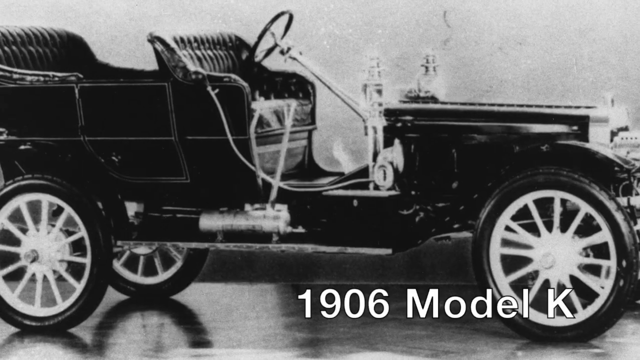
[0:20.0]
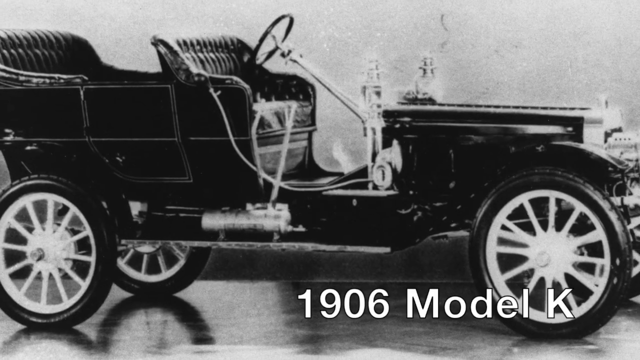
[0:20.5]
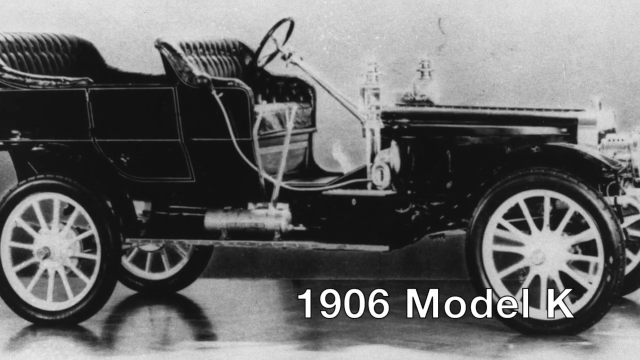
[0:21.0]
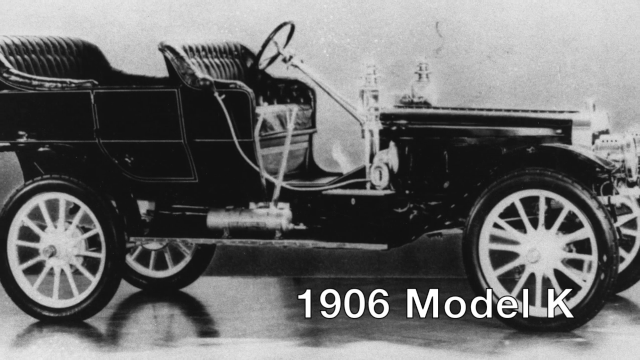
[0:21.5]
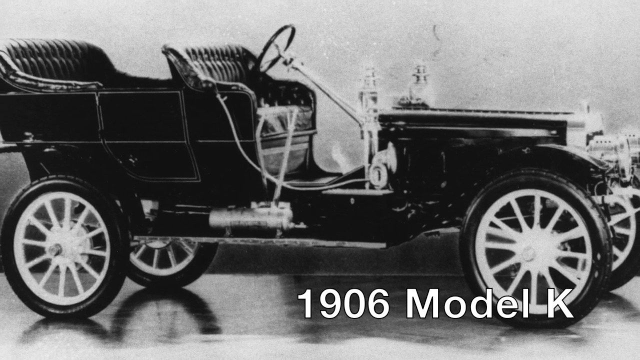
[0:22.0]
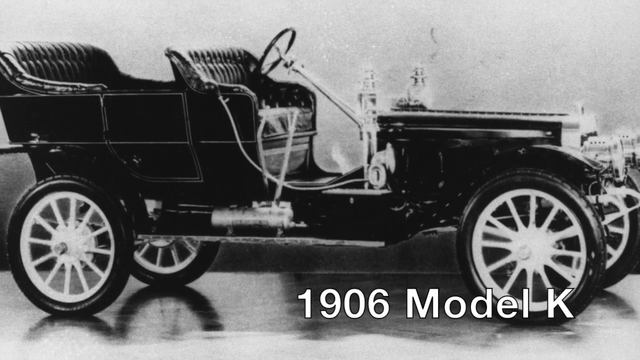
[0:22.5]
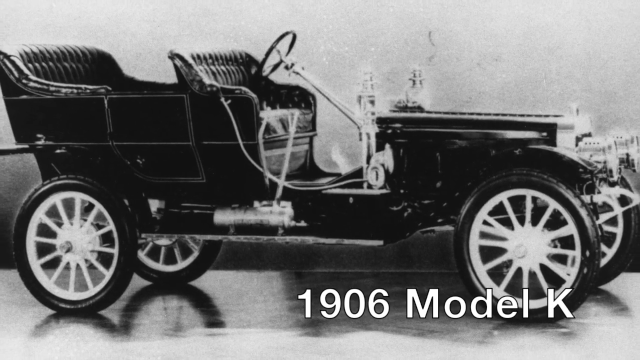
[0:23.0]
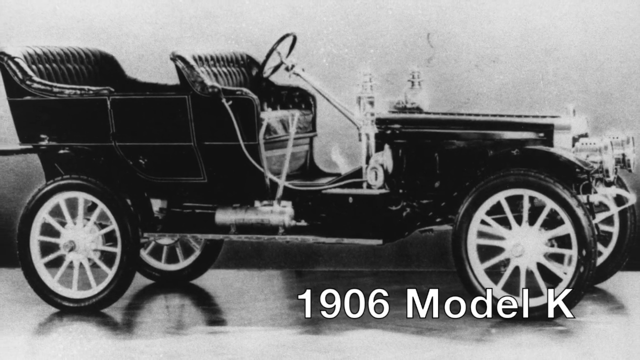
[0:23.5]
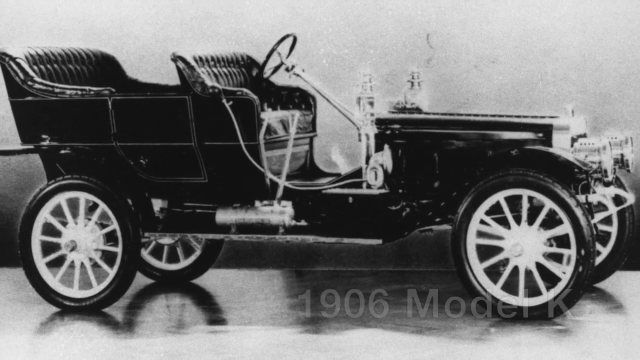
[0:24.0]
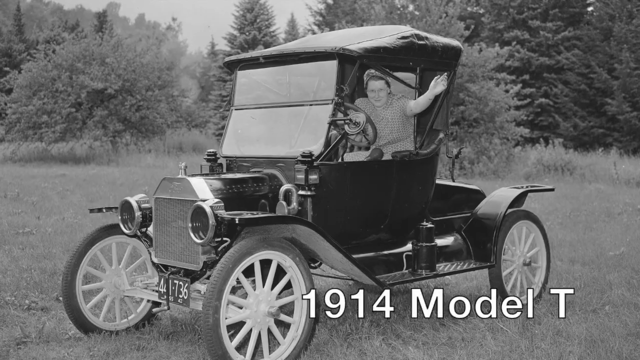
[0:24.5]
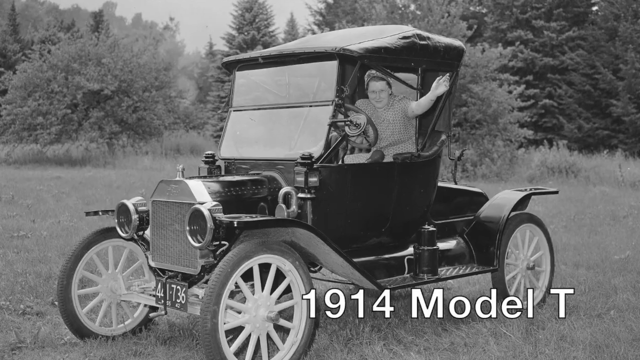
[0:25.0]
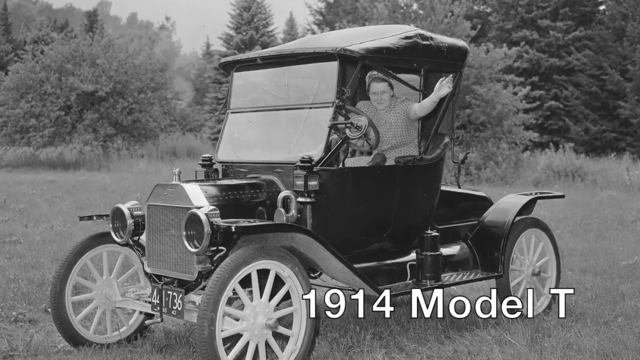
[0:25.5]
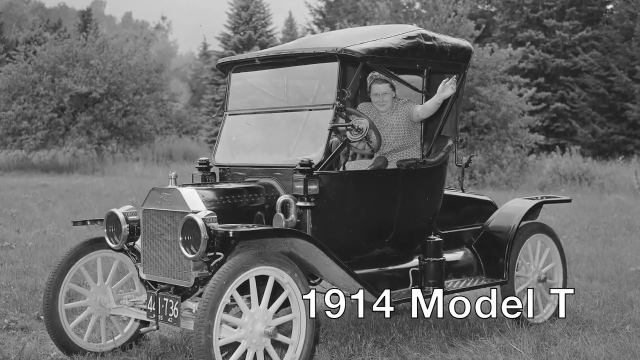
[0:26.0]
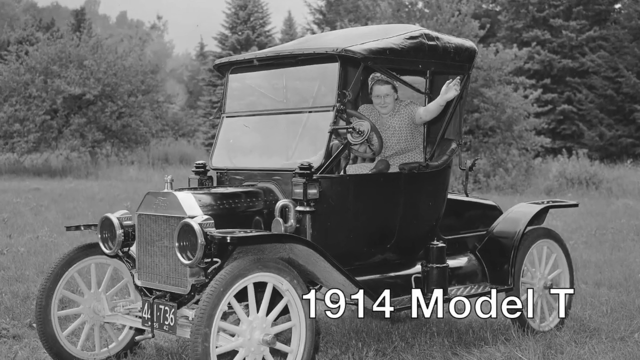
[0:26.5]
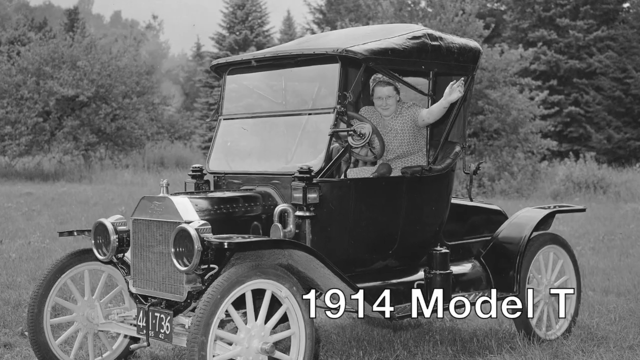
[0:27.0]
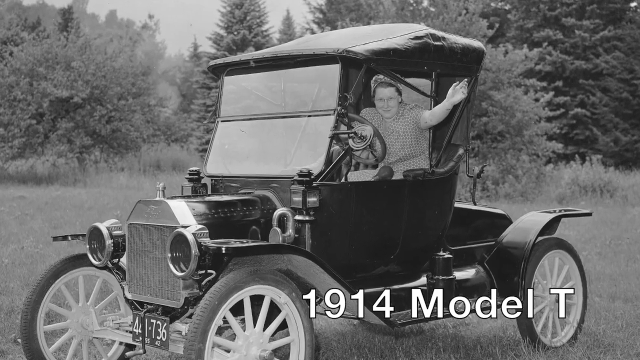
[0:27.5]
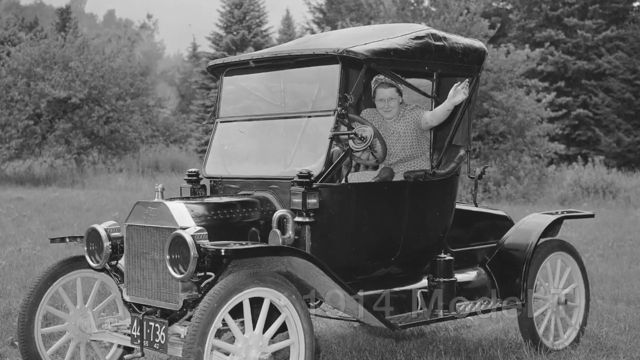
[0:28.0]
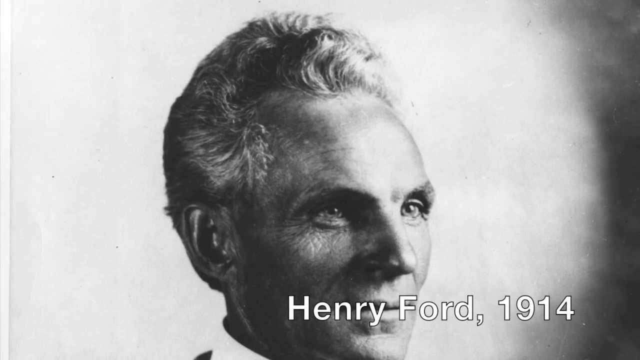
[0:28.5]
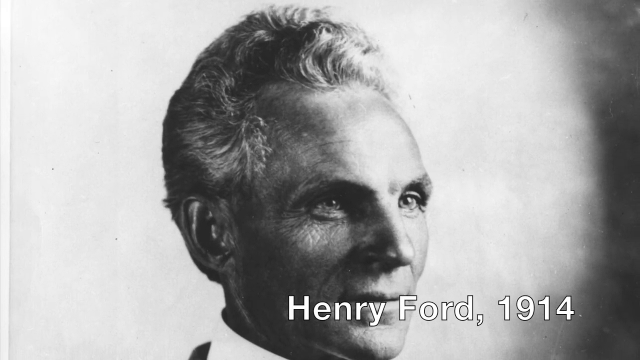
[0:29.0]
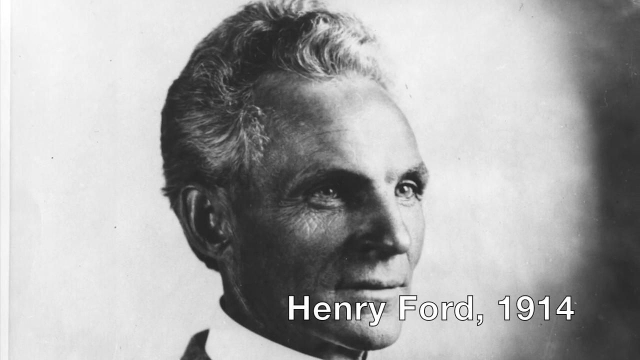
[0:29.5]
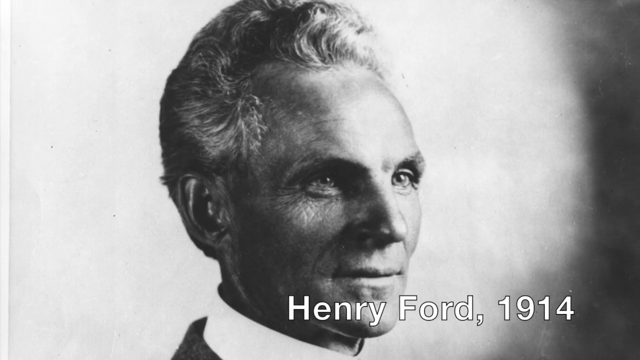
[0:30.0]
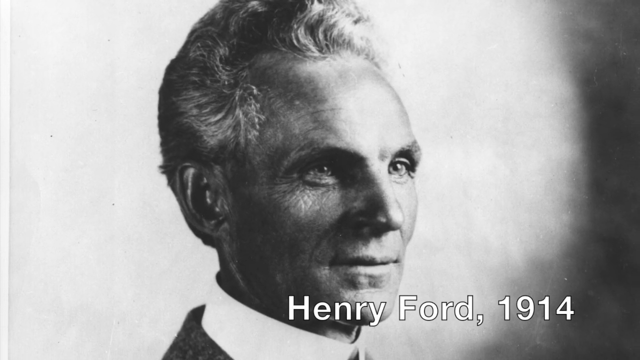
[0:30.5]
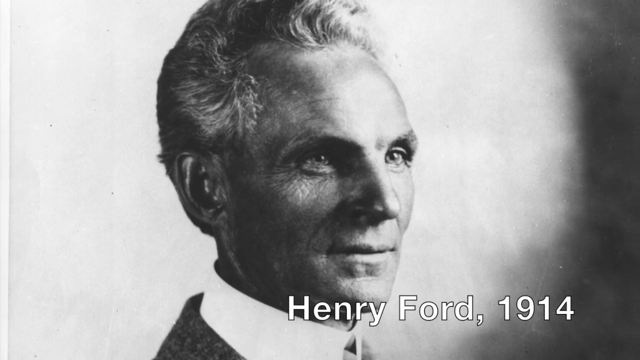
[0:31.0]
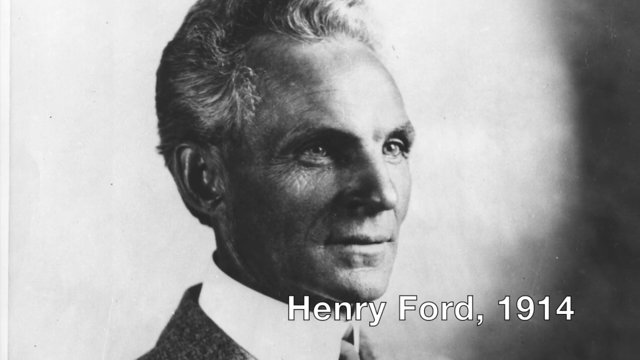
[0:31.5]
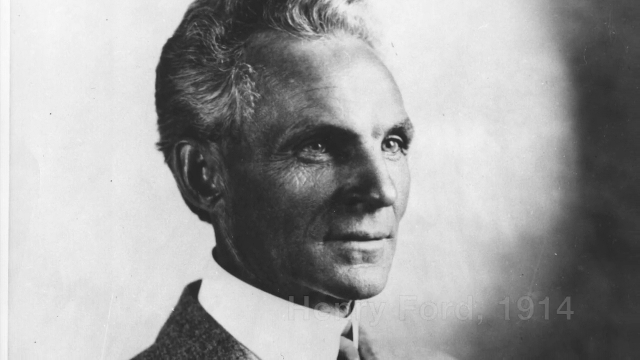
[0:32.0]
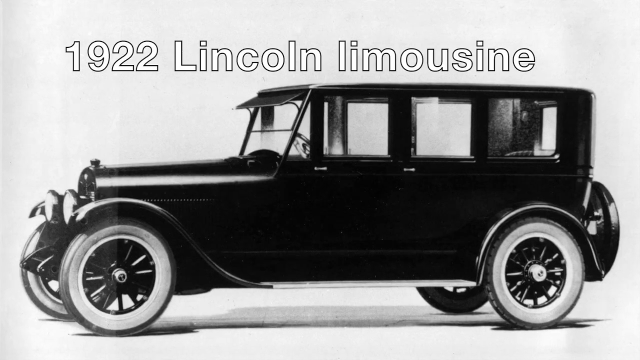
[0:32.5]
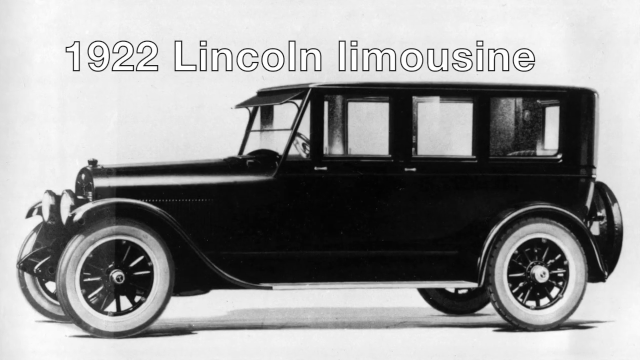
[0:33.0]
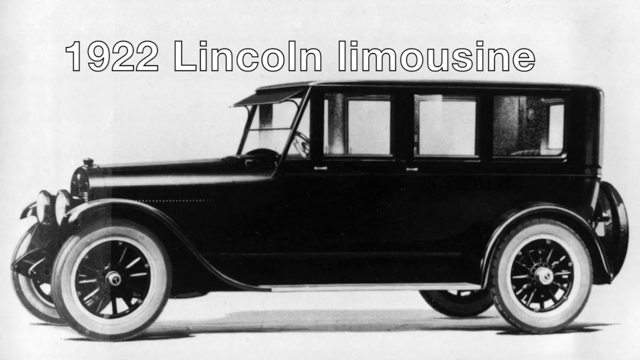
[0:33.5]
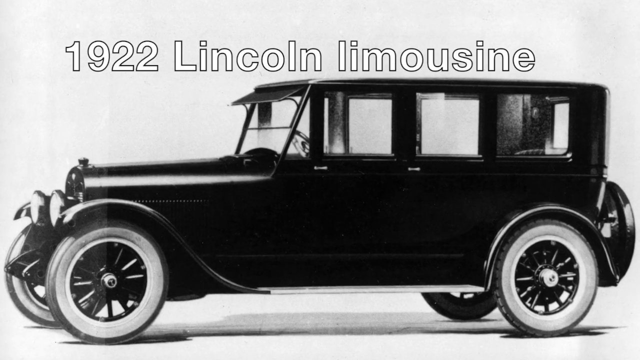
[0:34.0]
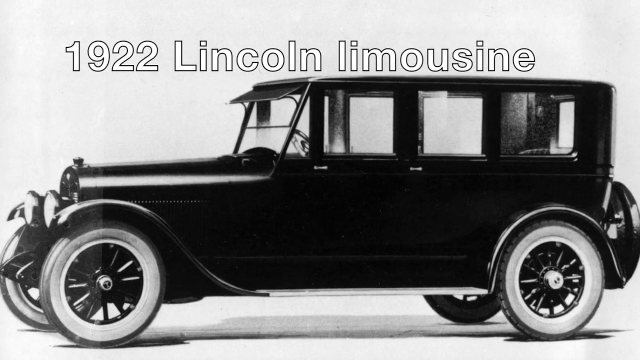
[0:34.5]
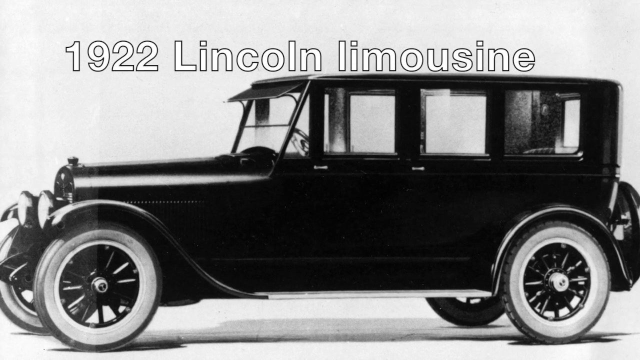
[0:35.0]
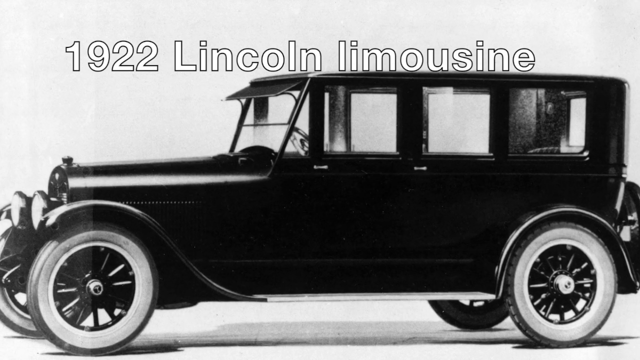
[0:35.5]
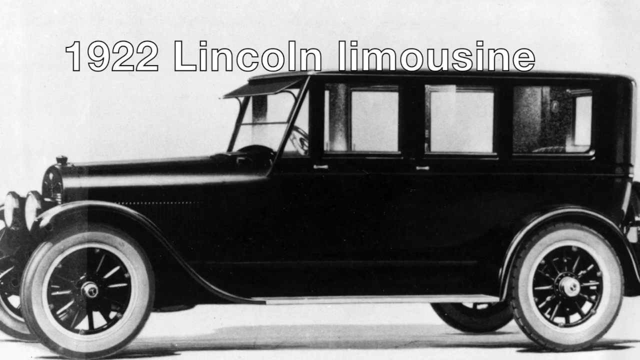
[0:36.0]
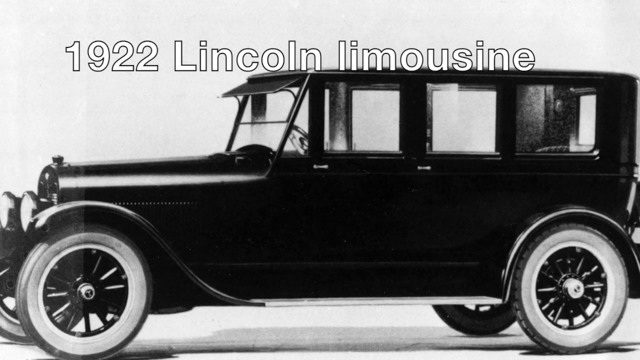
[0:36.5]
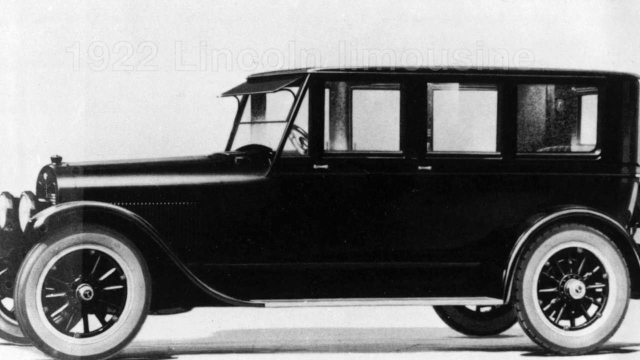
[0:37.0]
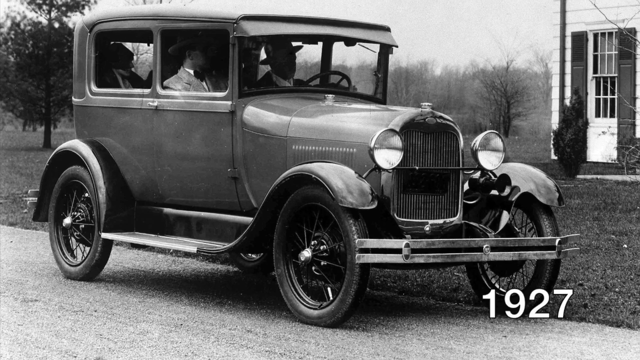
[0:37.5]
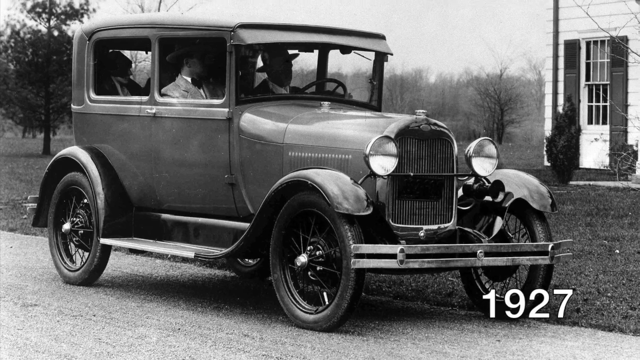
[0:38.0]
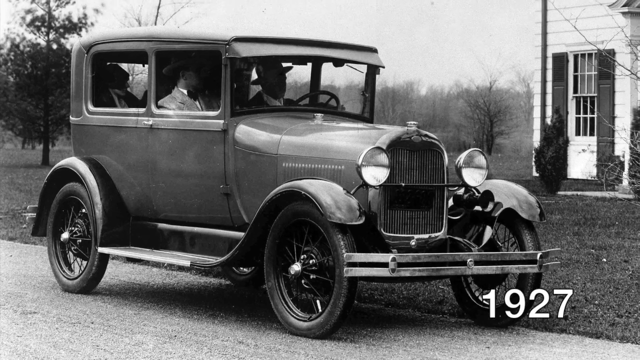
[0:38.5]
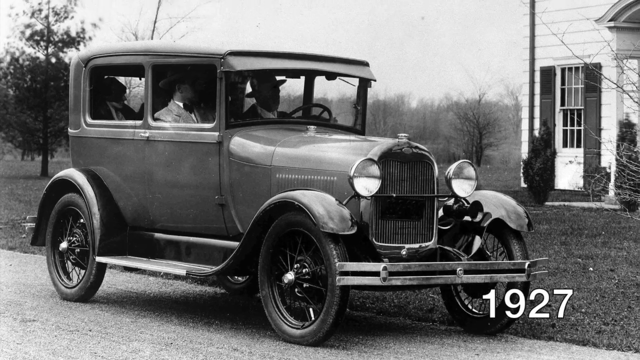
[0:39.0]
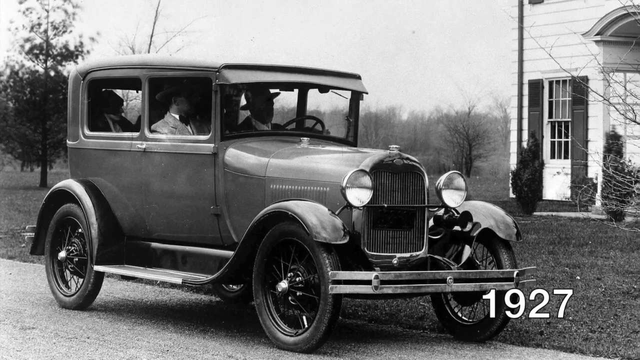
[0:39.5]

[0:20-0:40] A black and white photo shows the 1906 Model K, which is much larger than the previous models and offers more seating. Added conveniences are apparent: headlights, a long steering wheel, and horns mounted on the side. The models transition to covered vehicles that protect the drivers. There is a 1914 model with a cloth cover, a photo of the 1922 Lincoln limousine, and the 1927 Ford. A photograph of Henry Ford in 1914 shows his silvery hair long and flowing back. Later vehicles have a much sturdier cover over the seated areas, windshields, and other features enclosing the driver and passenger areas.